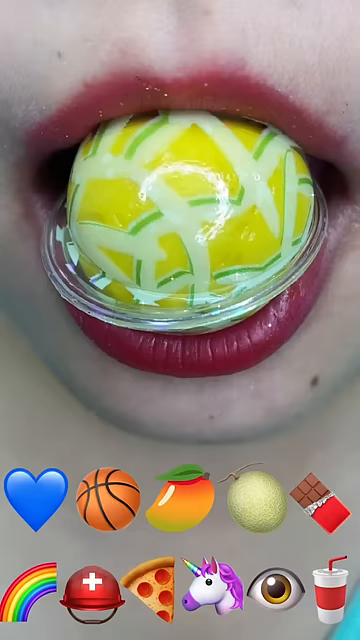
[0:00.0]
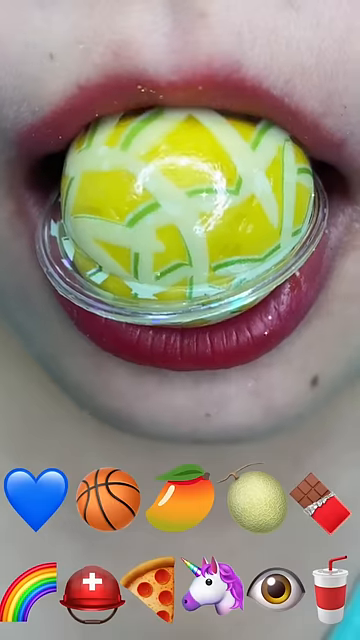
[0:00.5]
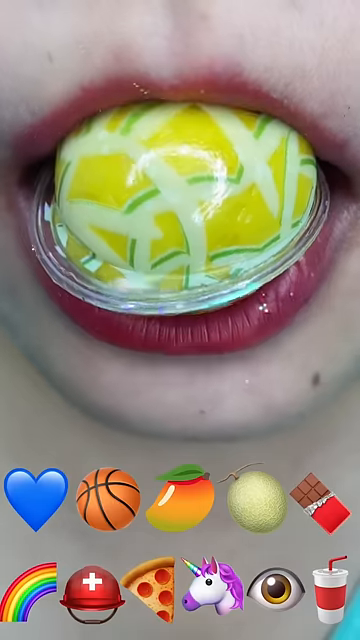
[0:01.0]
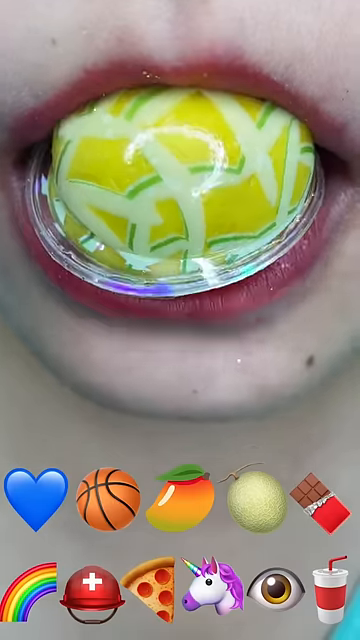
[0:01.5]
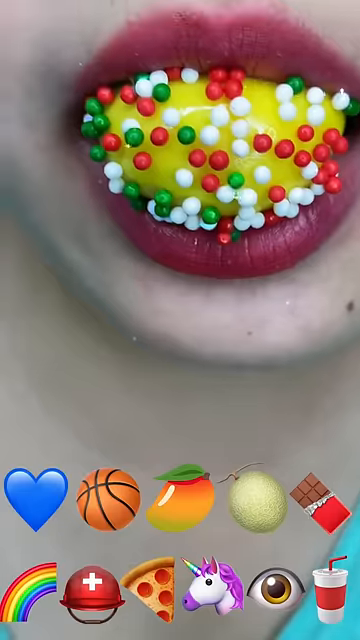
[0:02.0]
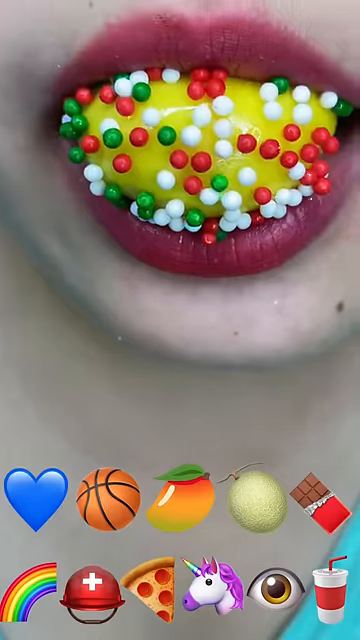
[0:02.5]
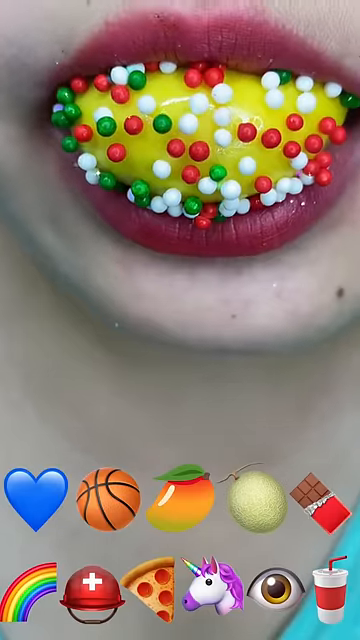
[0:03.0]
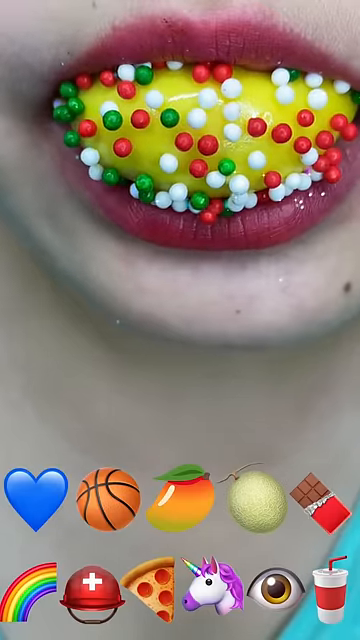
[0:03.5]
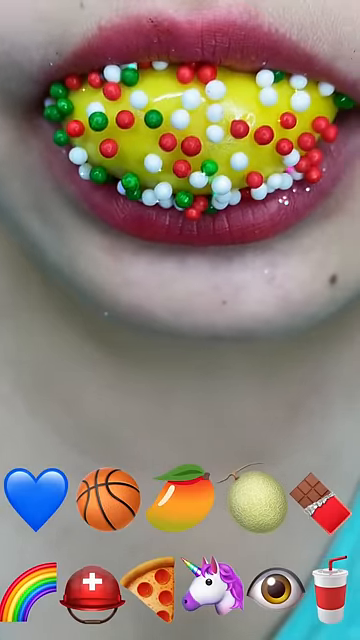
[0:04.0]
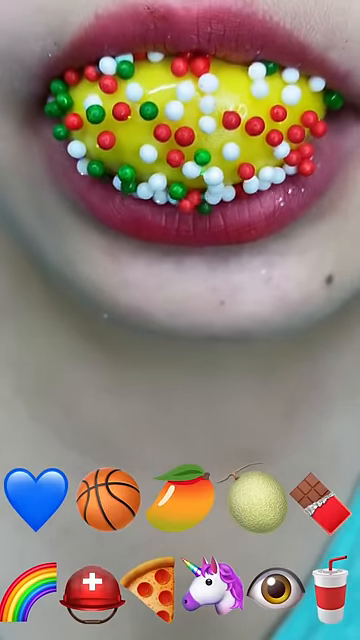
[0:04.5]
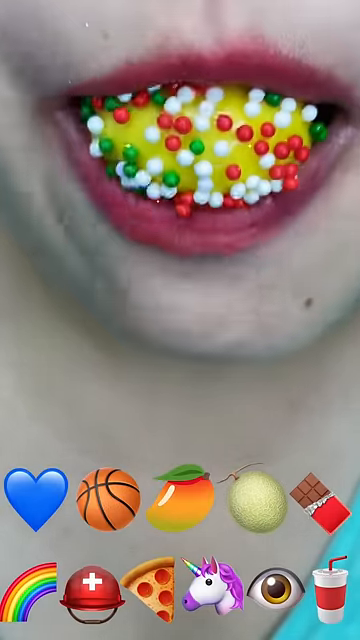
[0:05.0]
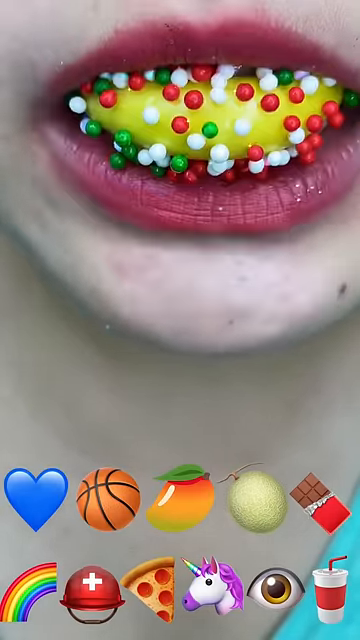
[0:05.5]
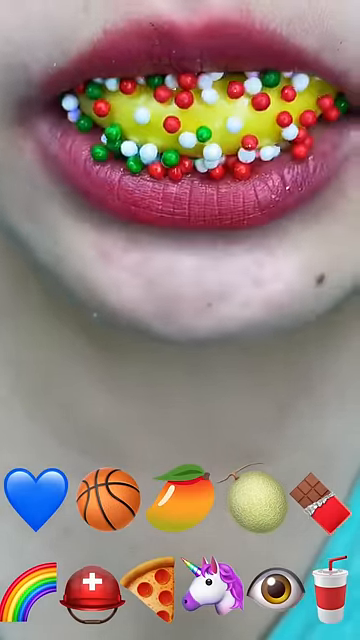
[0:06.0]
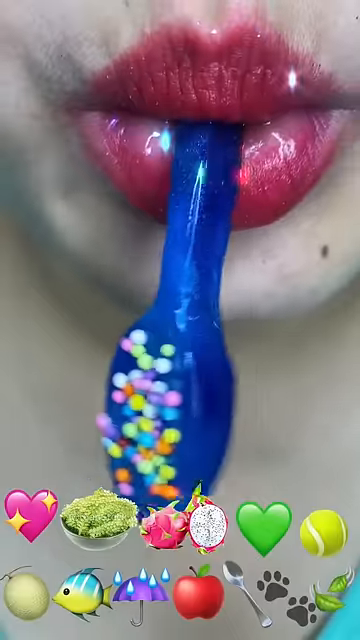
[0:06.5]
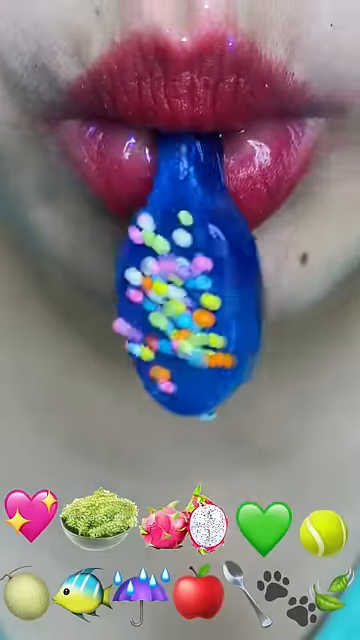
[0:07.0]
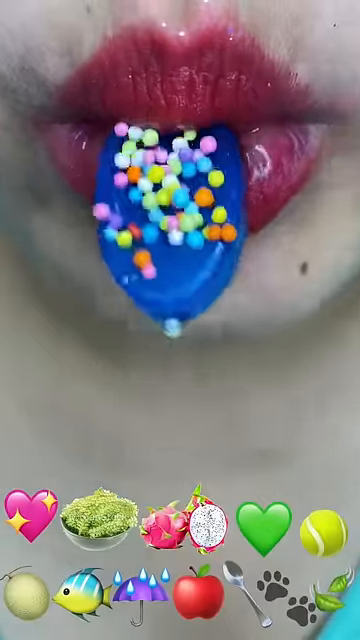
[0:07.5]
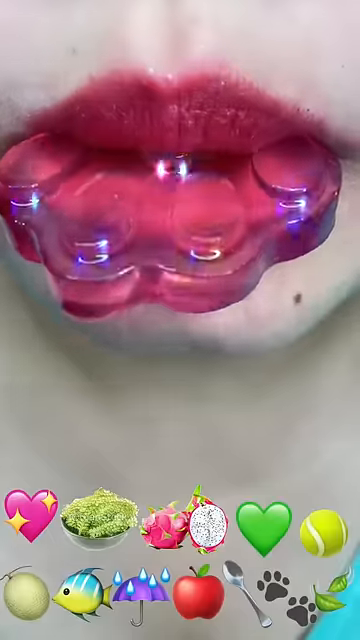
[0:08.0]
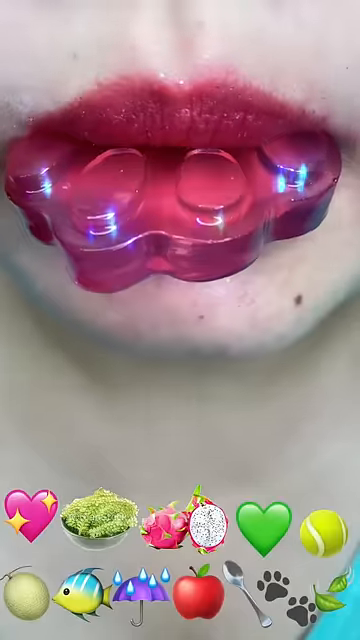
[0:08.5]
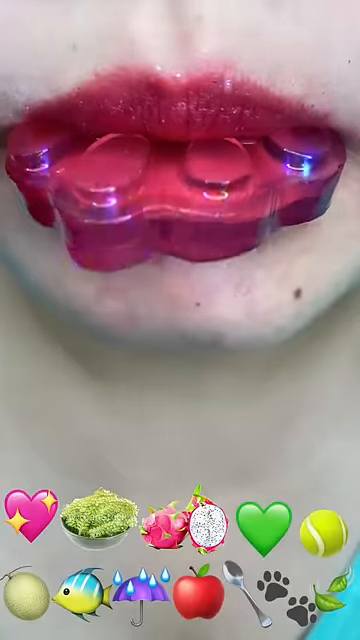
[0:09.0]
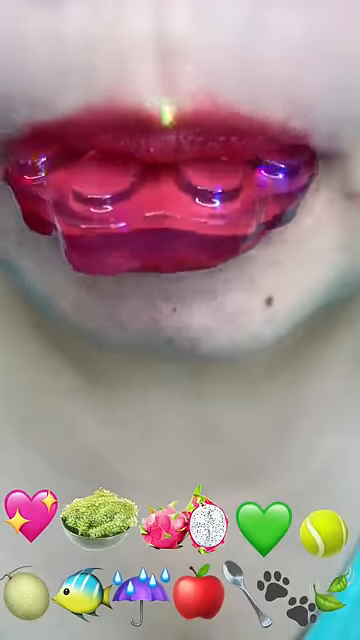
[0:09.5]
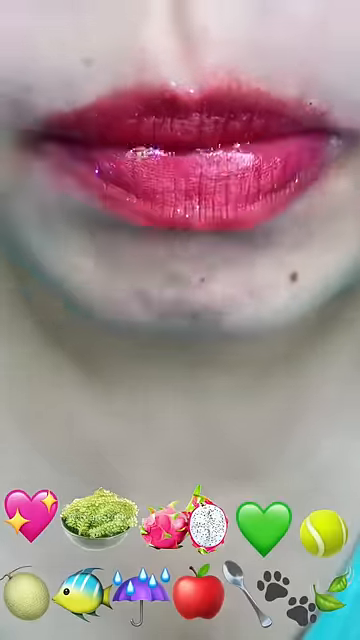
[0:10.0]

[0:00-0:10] The video is a close-up of a person's mouth, chin, and neck, with different squishy objects in their mouth. The person is pale-skinned, has a mole on their chin, and wears a red-pink lip stain. They place various sticky, squishy items in their mouth, some of which are covered with some sort of sprinkle, and slowly pull the items into their mouth. Different emojis appear on the lower part of the screen for almost each type of item being pulled into the mouth. The first item is a yellow ball in some sort of packaging; as the person squishes it, it starts to come out of the package. The next shot shows that same yellow ball from the package covered with red, white, and green sprinkles, which the person is chewing or somehow sucking into their mouth. Next comes a long, squishy, blue, jelly-looking object that is also covered in sprinkles. After that, there is a pink, gummy-looking object with a pattern, which the person also pulls into their mouth.